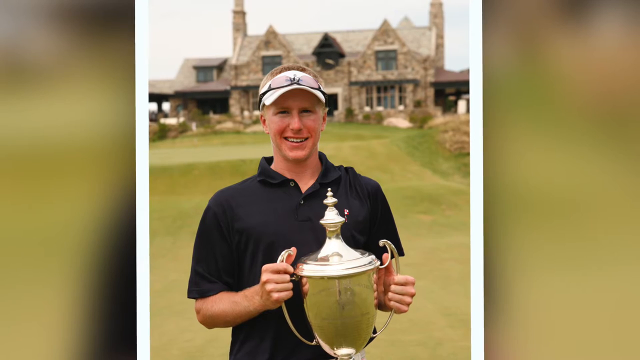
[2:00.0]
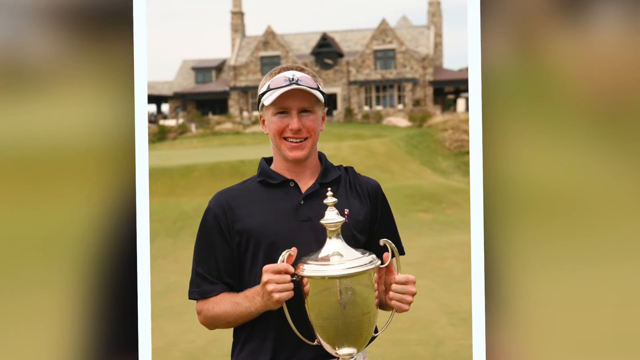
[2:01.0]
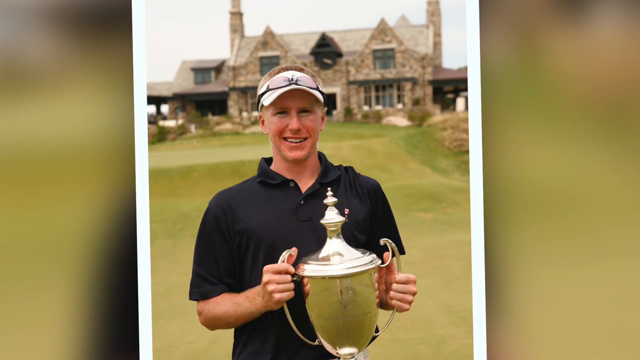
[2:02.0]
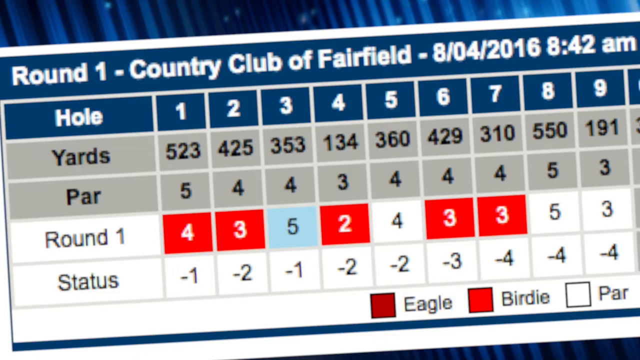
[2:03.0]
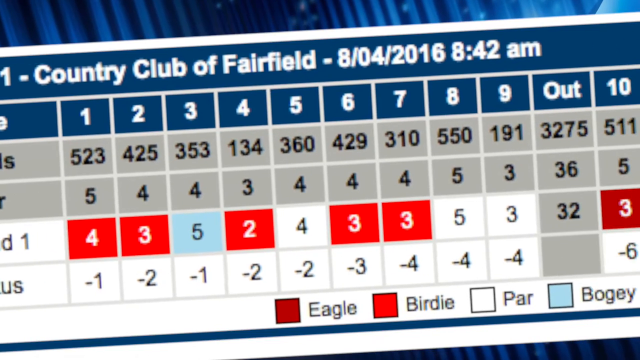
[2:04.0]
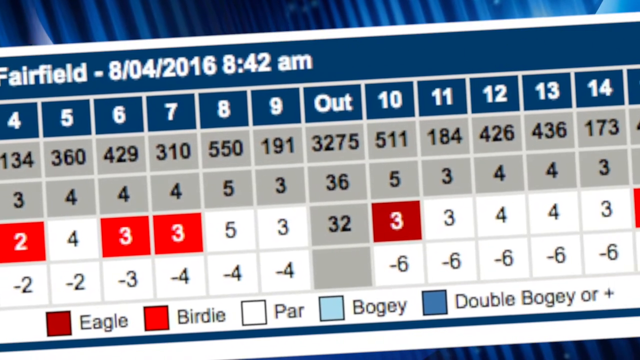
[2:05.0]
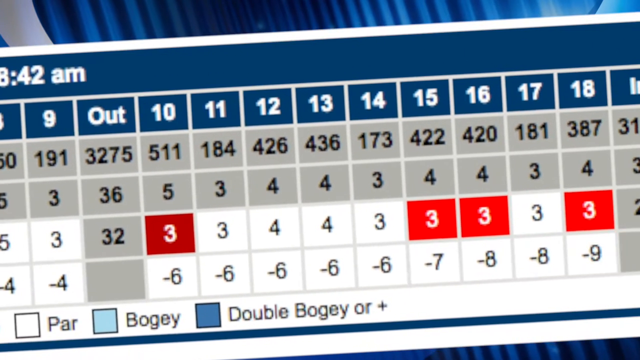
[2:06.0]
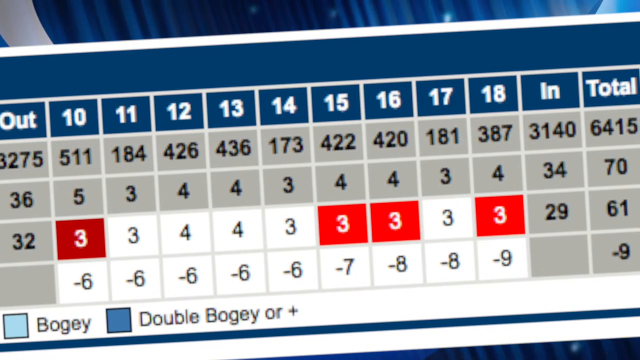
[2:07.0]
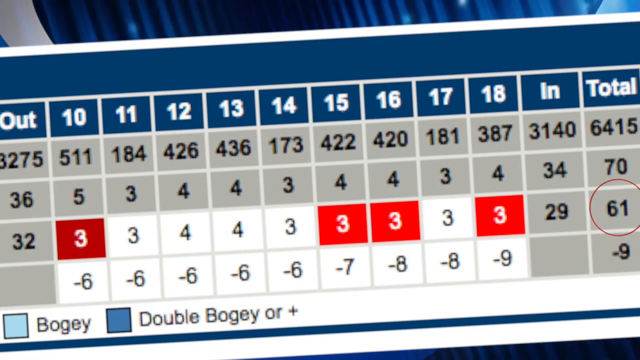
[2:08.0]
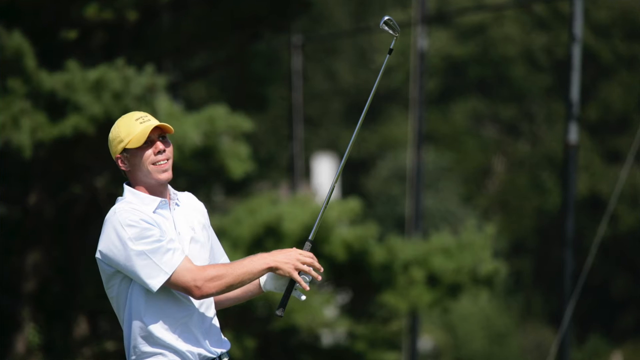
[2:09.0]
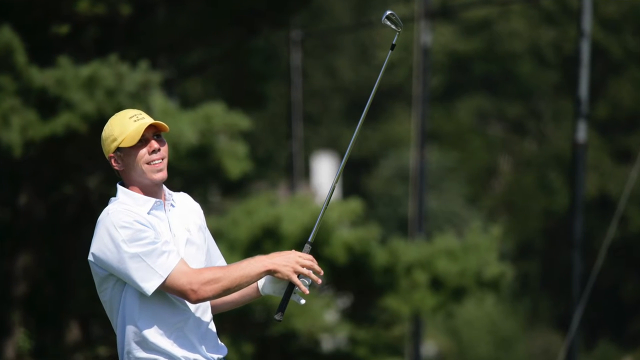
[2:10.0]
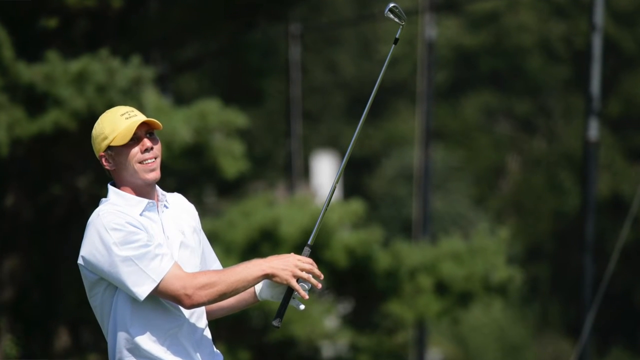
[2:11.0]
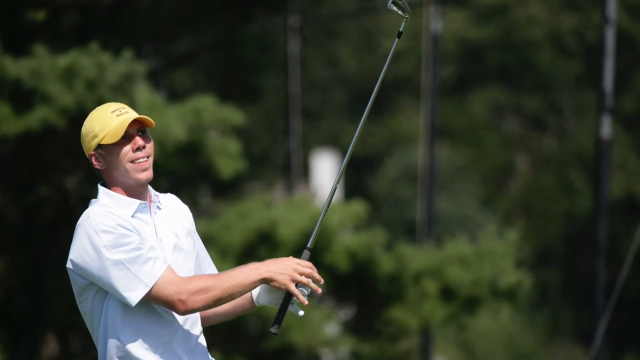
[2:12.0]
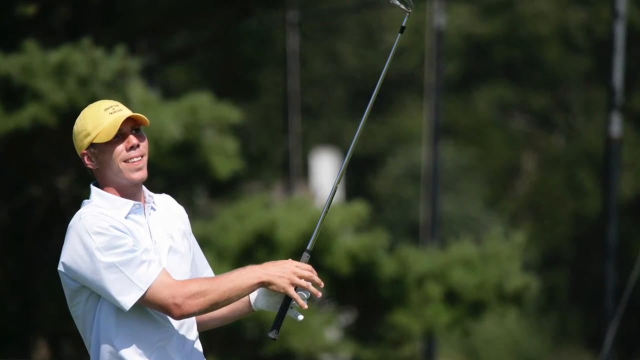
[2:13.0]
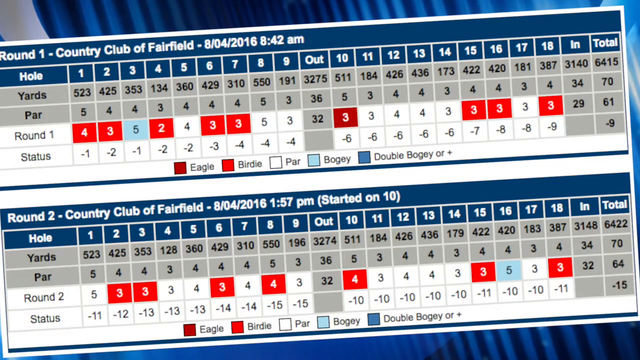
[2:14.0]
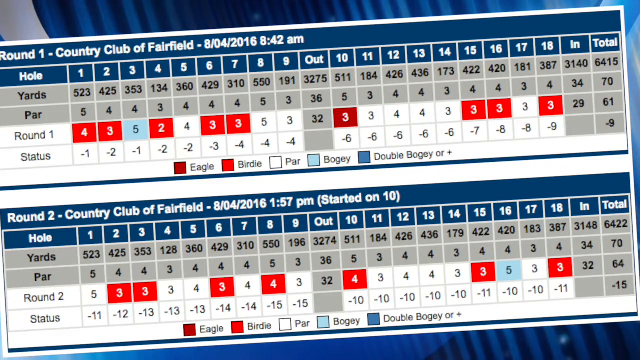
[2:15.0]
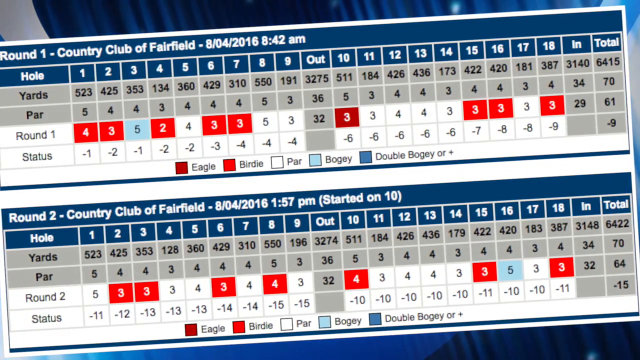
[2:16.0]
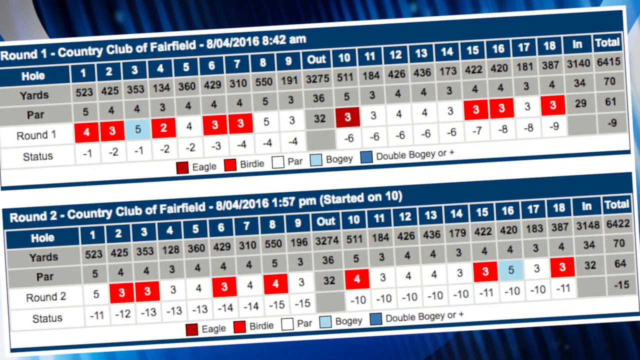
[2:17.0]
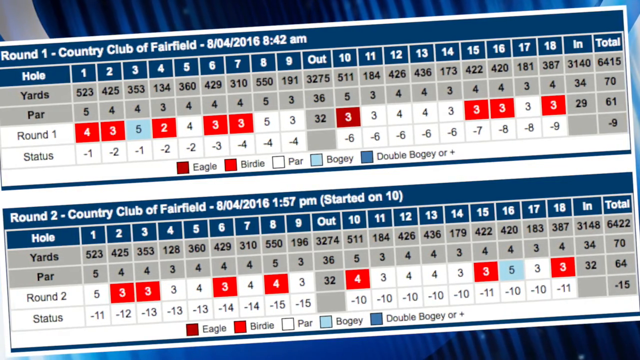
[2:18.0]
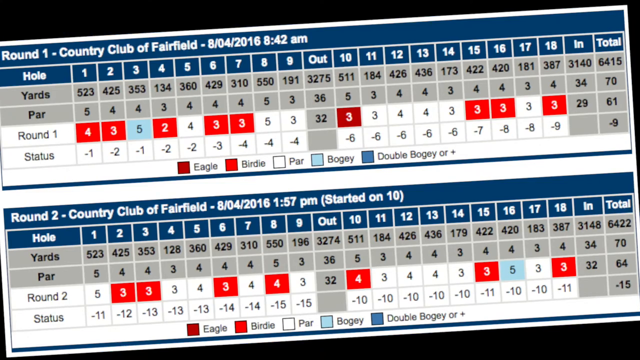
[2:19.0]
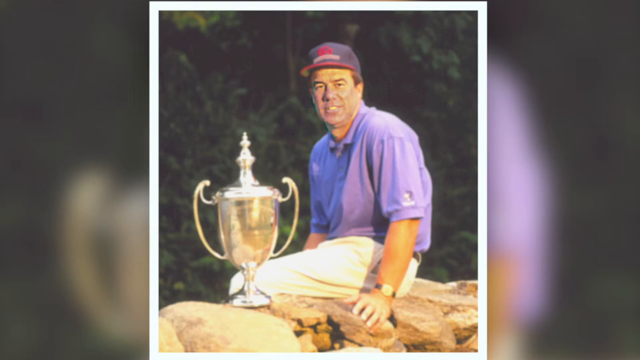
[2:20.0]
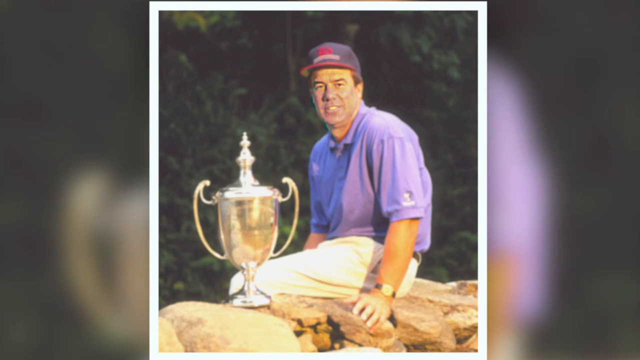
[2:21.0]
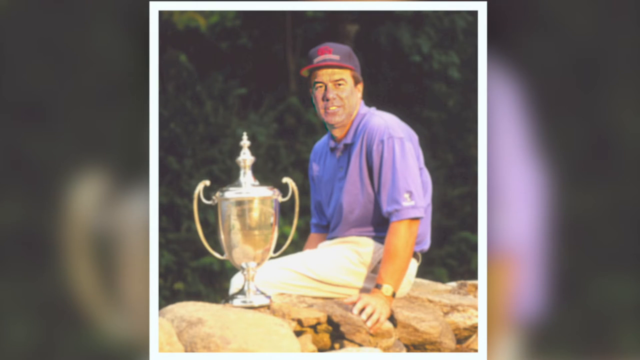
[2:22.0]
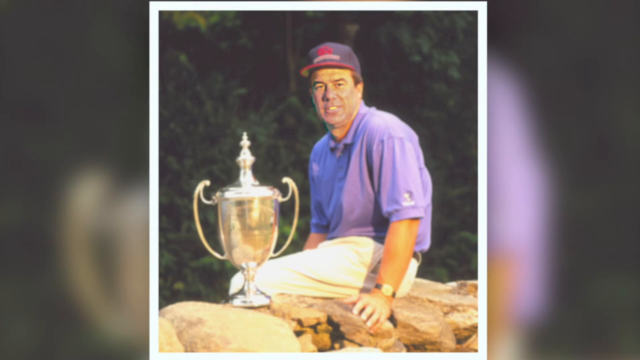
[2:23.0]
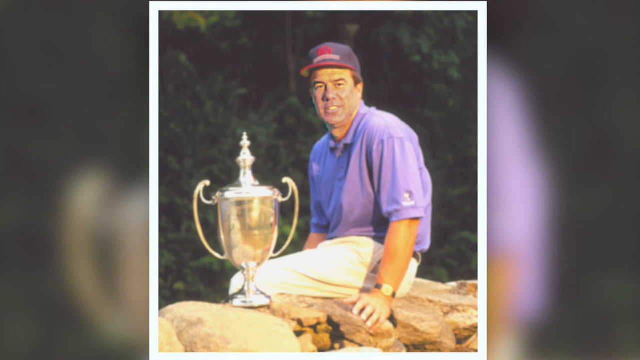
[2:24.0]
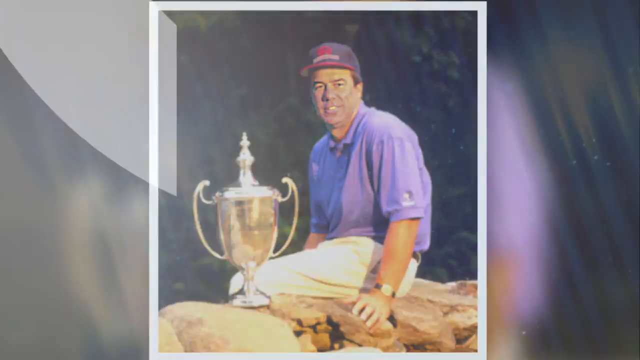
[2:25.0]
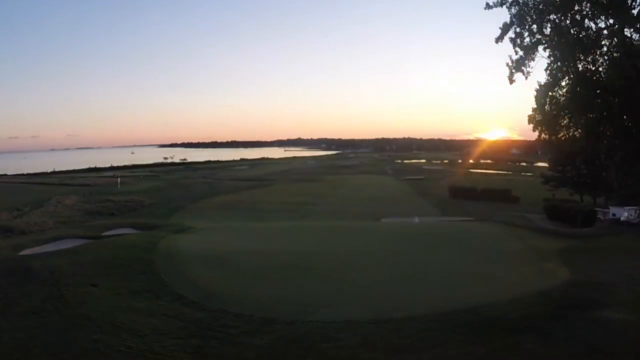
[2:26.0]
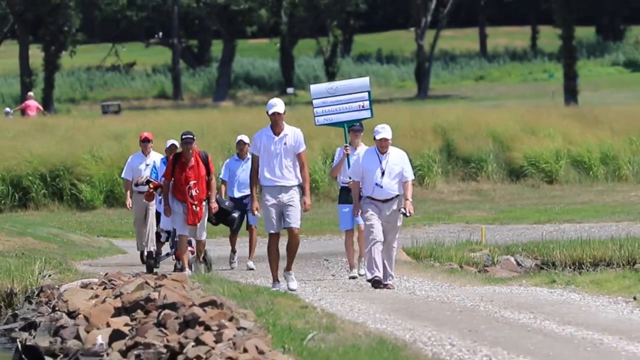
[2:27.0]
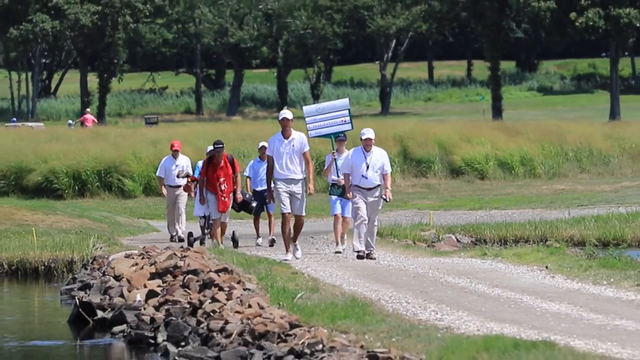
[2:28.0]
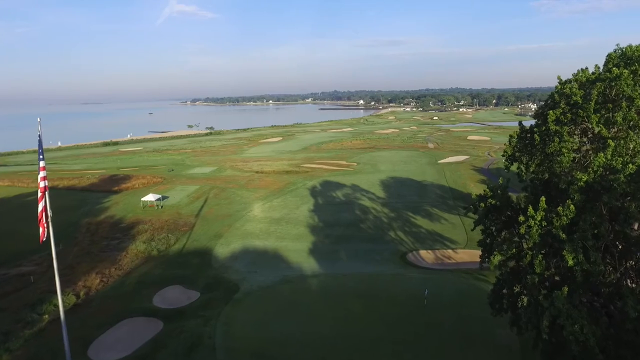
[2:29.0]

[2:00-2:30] The video cuts to an image of another man holding the same trophy, perhaps a former winner photographed in a previous year. He wears a white visor with sunglasses on it and a black polo shirt, and stands in front of an old-looking stone brick building. It cuts to a scorecard on which the final score of 61 is highlighted by a red circle being drawn around it. An image of another golfer in a yellow cap follows, looking over a shot he has just completed; the photo zooms in slowly. It then cuts to more scorecards, where round two looks like it started at 1:57 p.m. Another image of a former winner of the trophy appears, and another blue transition leads to more aerial shots of the course and various golfers walking.